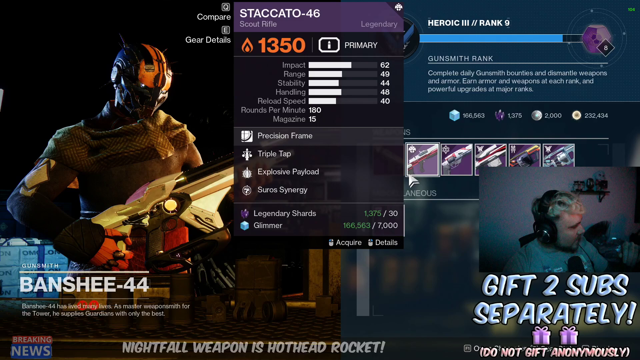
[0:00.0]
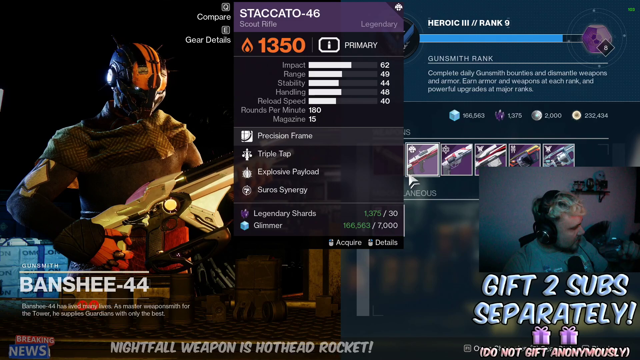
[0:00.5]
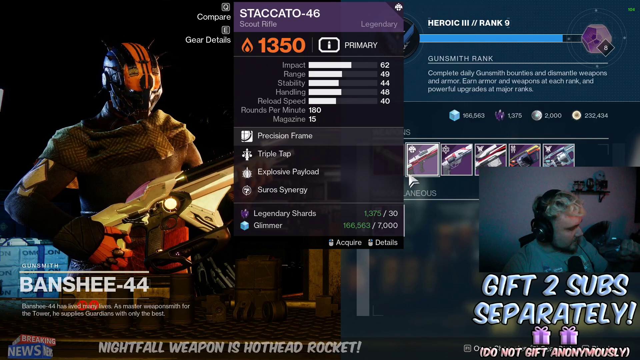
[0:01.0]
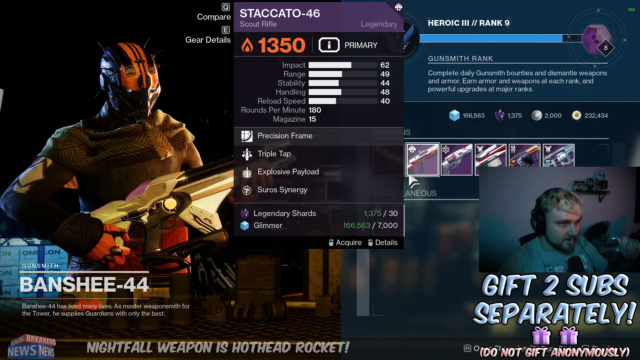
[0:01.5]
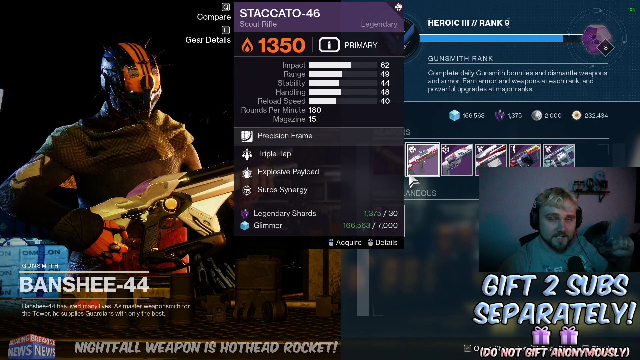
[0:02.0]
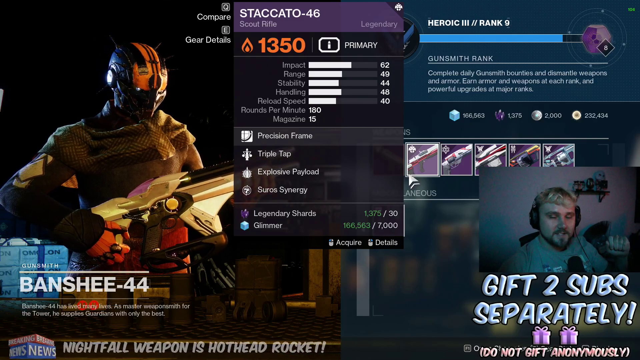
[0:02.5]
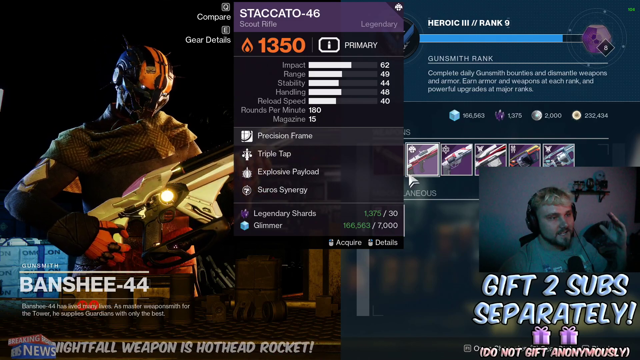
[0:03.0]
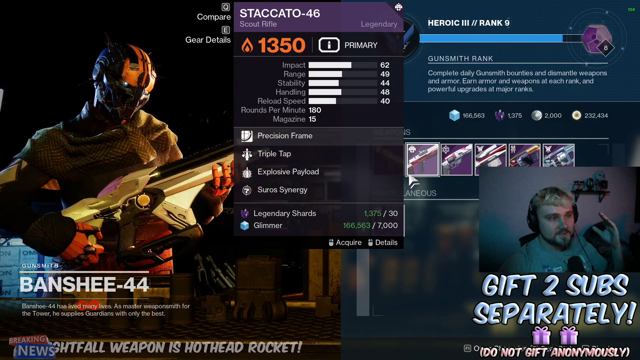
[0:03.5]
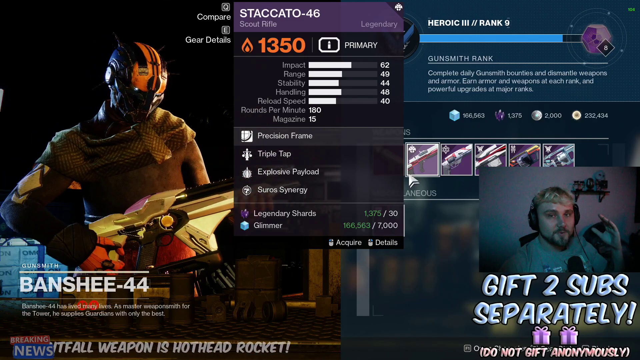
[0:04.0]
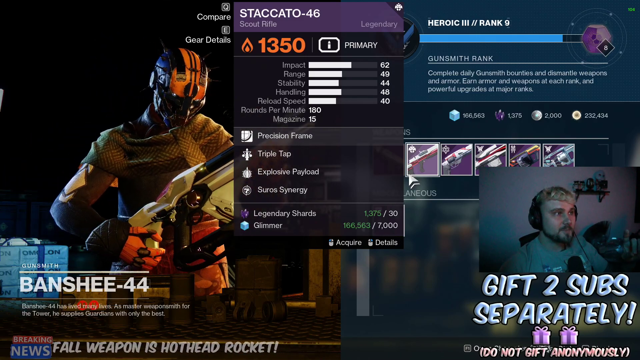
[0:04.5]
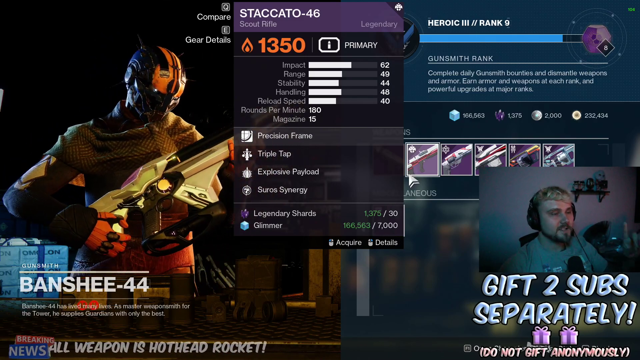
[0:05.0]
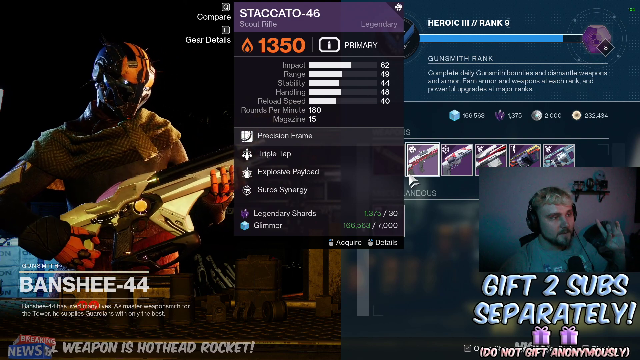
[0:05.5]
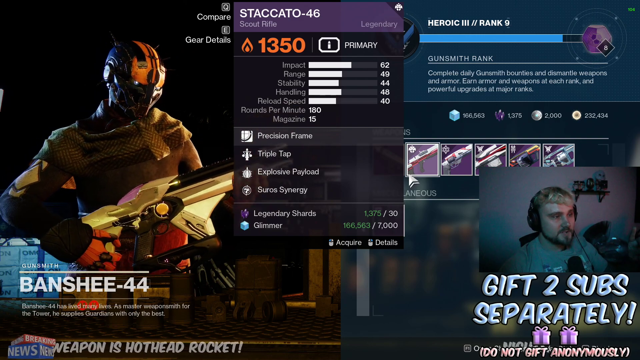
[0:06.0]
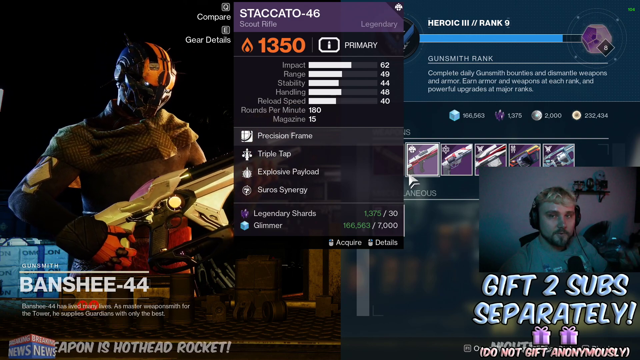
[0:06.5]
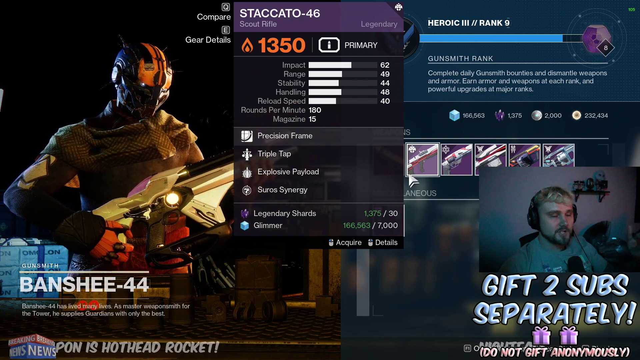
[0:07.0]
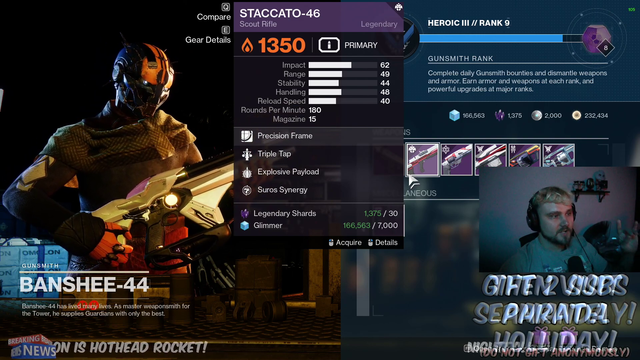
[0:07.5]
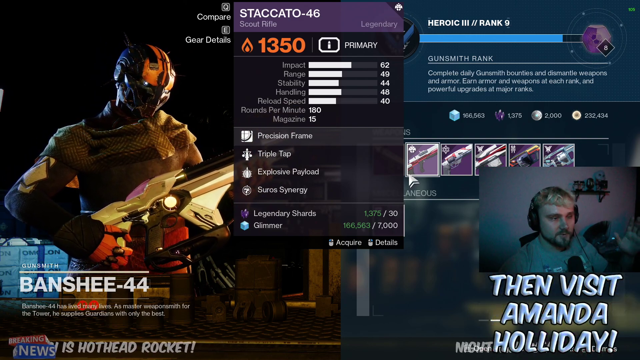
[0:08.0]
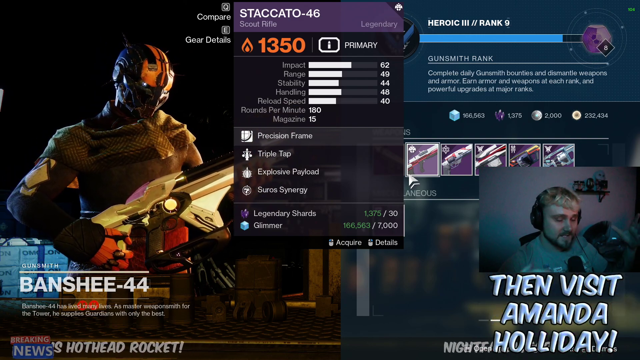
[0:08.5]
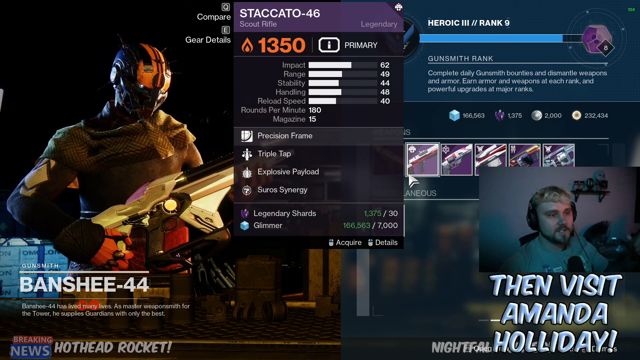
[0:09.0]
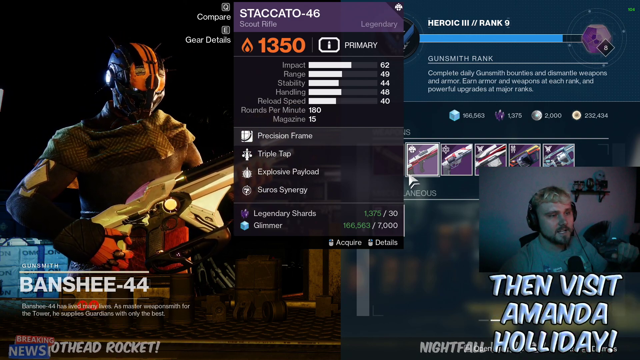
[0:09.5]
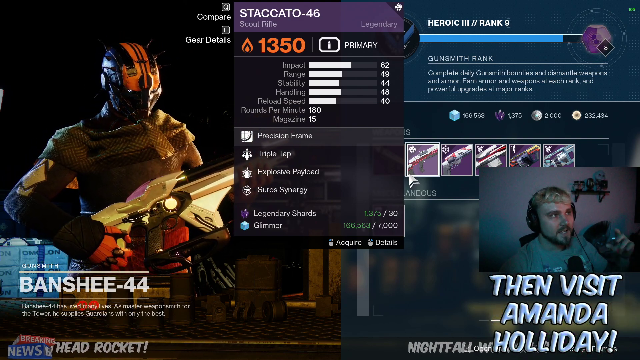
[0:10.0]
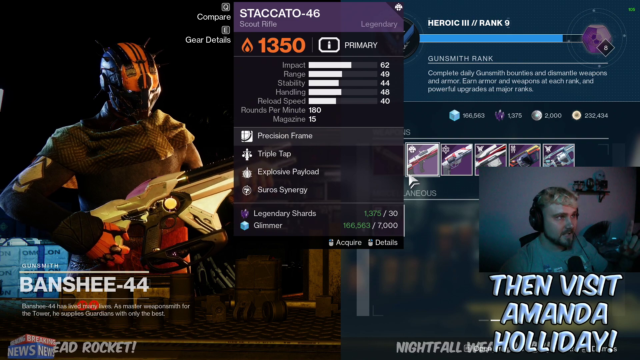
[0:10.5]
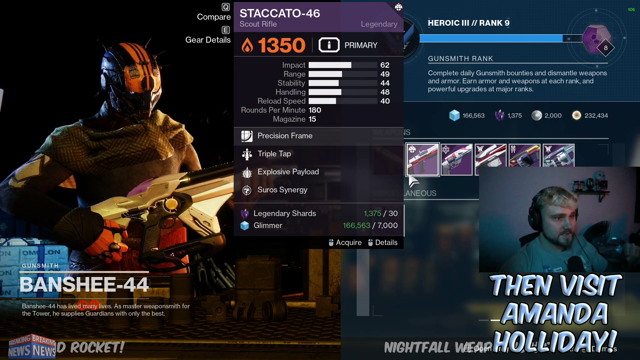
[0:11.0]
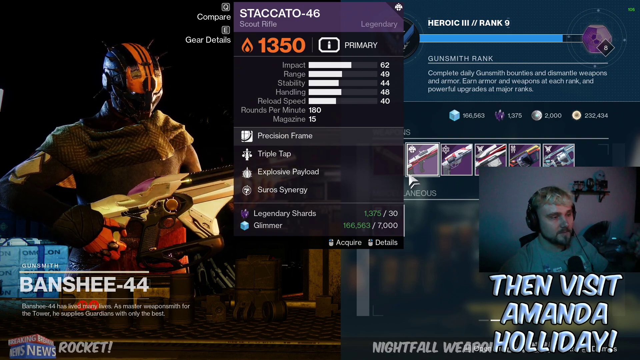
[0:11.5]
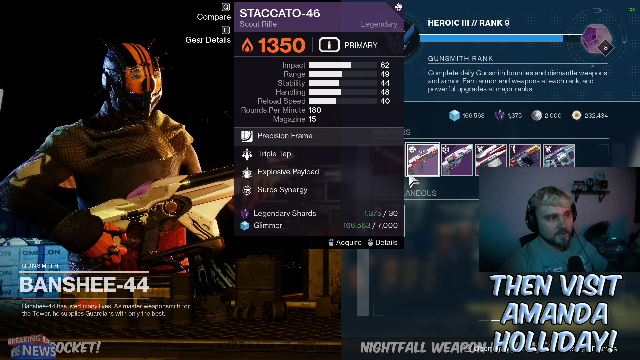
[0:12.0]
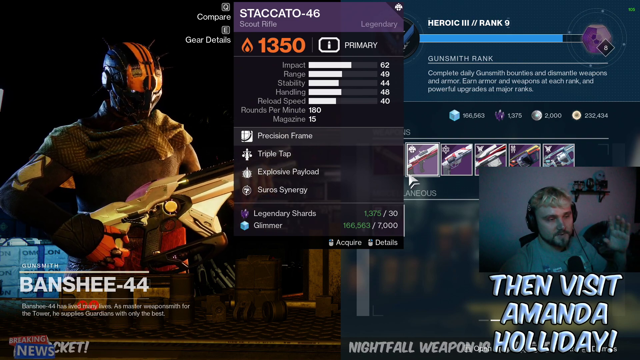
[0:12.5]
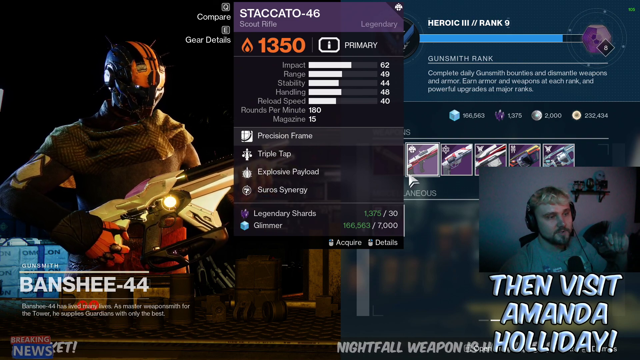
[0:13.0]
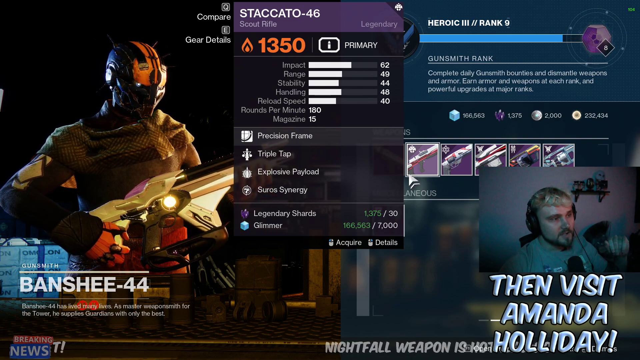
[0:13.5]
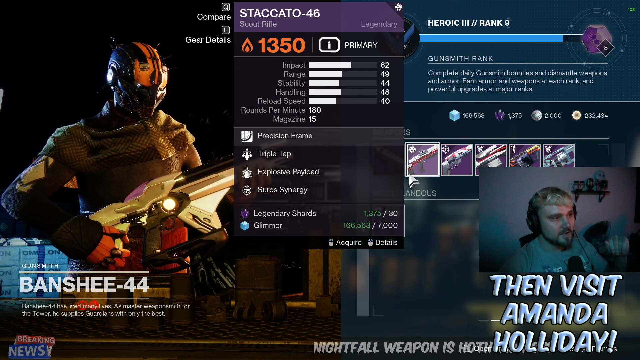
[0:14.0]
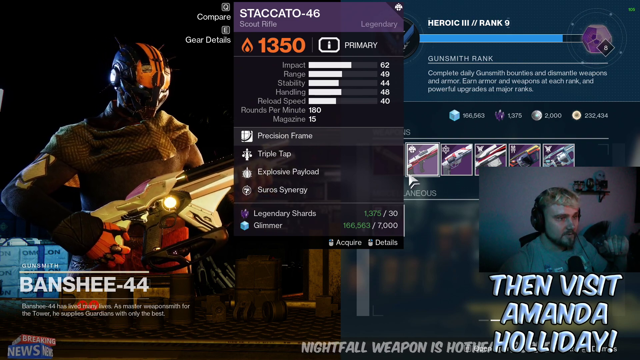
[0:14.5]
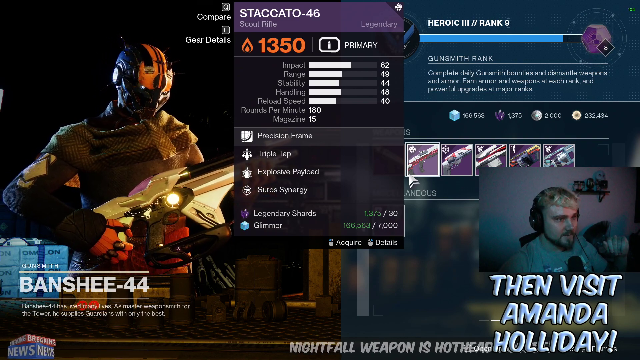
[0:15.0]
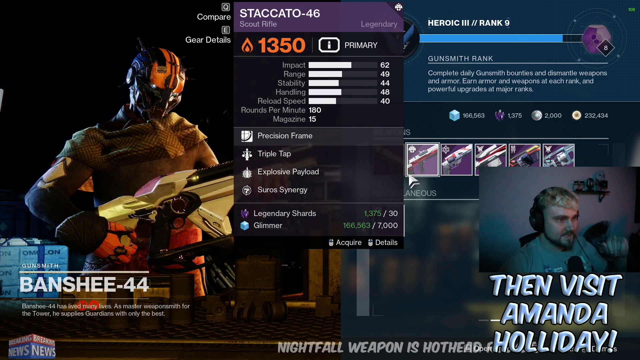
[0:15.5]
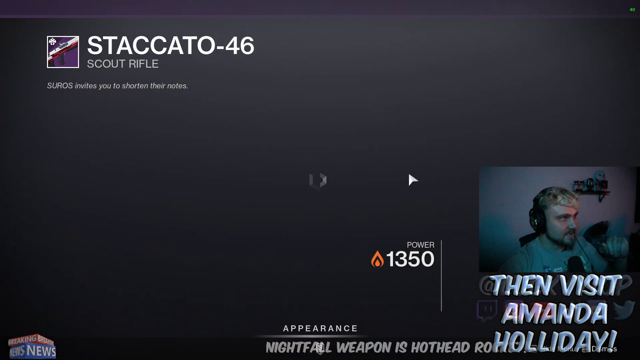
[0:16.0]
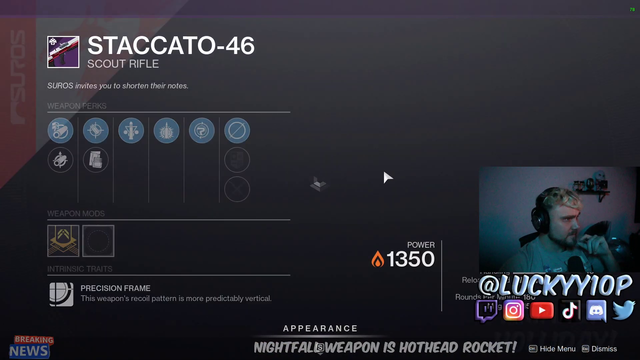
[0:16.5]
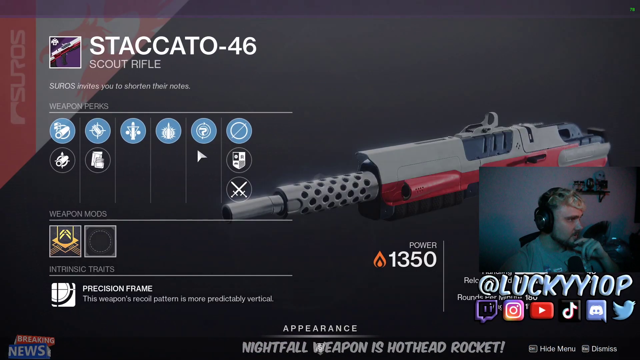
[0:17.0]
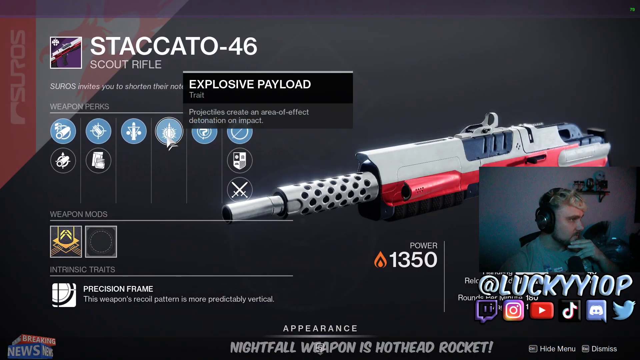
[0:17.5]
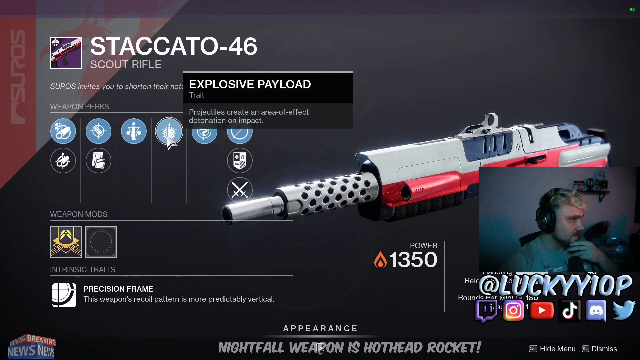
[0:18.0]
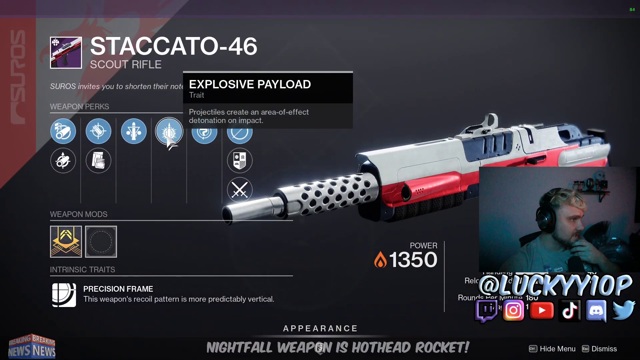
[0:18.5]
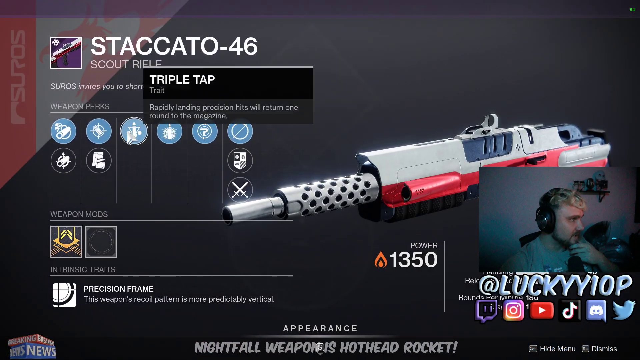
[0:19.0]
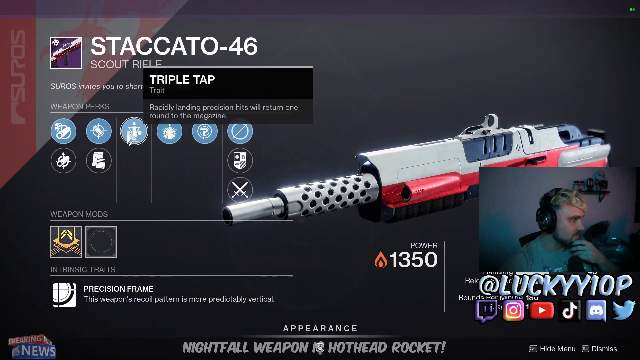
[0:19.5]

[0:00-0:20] The video appears to be about a video game. On the left side, a character holds a type of gun. Underneath, in big bolded white letters, is the name "Gunsmith", and the text "Banshee-44" appears. On the right-hand side is a man who looks like a white male with blonde hair and appears to be streaming. At the bottom right, text in what looks like light blue letters with a black outline reads "gift two subs separately", followed by "then visit Amanda Holliday". In the center, a rectangle at the top with a purple background reads "Staccato-46", and beneath it, in small letters at the bottom left of that title, is "Scout Rifle". On the top right side is a solidly filled navy blue rectangle containing bold white letters reading "Heroic-3", two slashes, and "Rank-9". Below that is "Gunsmith Rank", and beneath it the text "Complete Daily Gunsmith Bounties and Dismantle Weapons and Armor. Earn armor and weapons at each rank and powerful upgrades at major ranks." As the streamer continues, "Breaking News" also appears at the bottom left, with "Breaking" on a red background and "News" on a blue background, the two moving horizontally against each other. When he clicks further, the Staccato-46 rifle is shown, white on top with a red middle finish. Small letters read "Power", with "1350" underneath. The streamer points to a perk called "Explosive Payload".